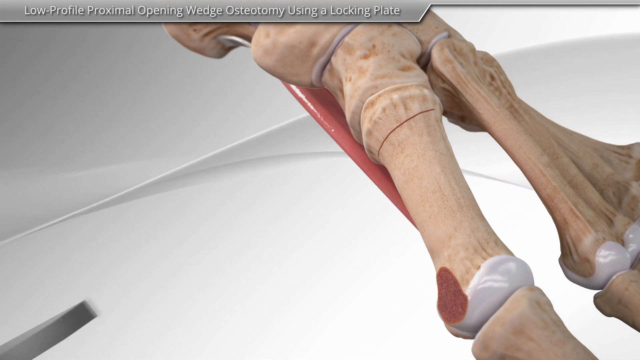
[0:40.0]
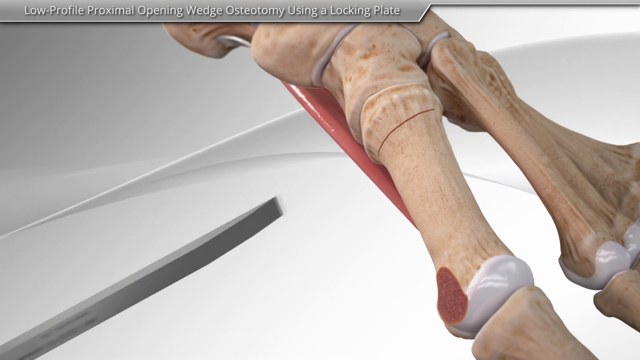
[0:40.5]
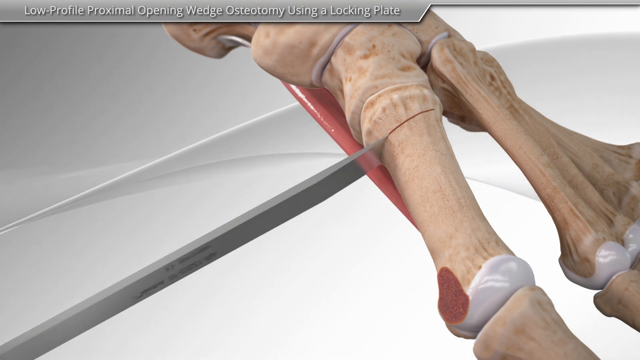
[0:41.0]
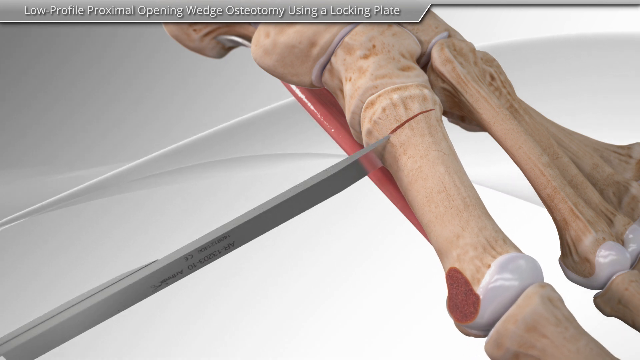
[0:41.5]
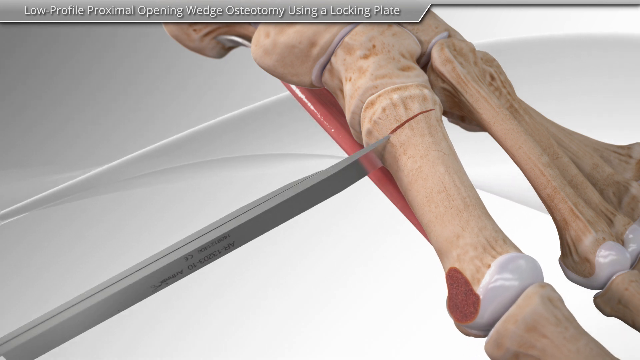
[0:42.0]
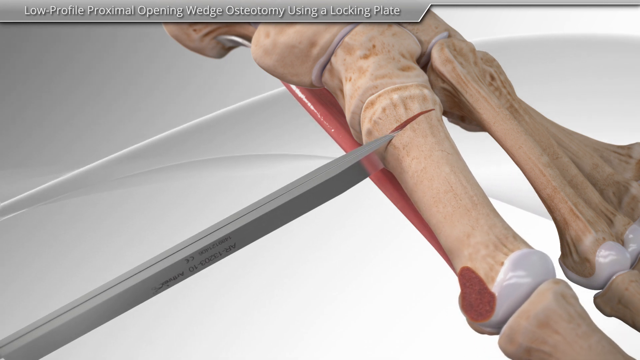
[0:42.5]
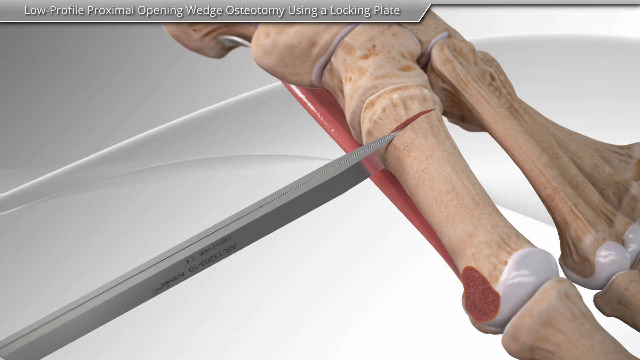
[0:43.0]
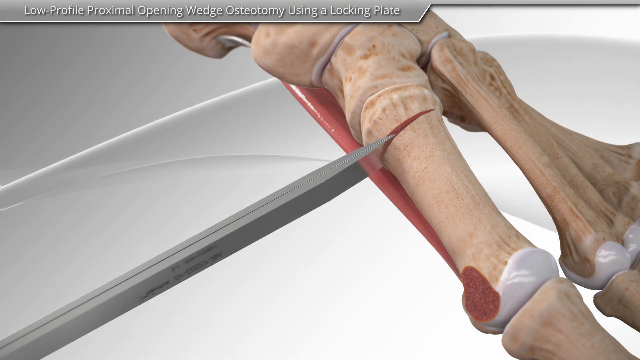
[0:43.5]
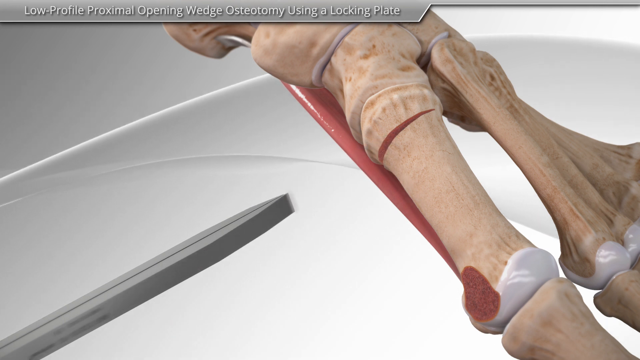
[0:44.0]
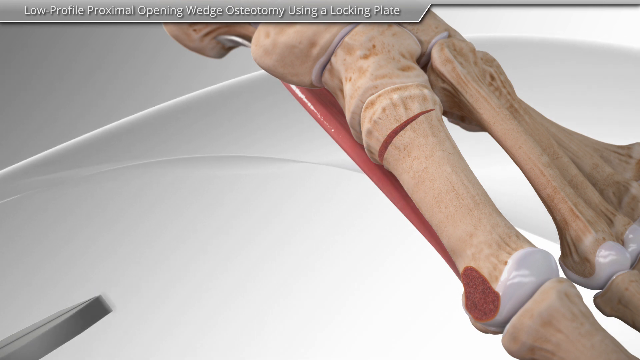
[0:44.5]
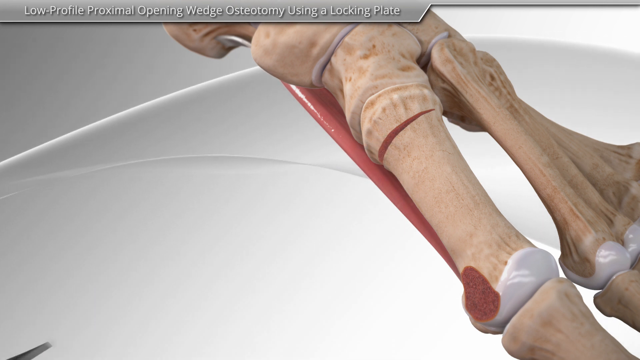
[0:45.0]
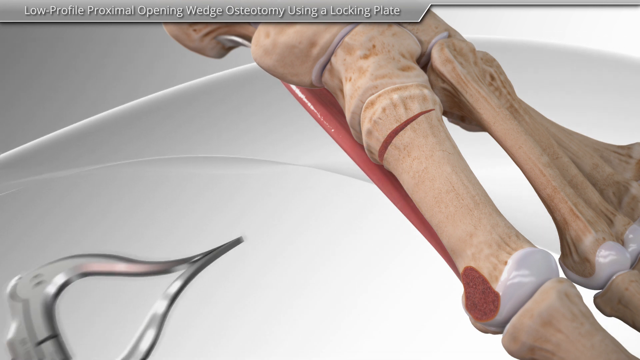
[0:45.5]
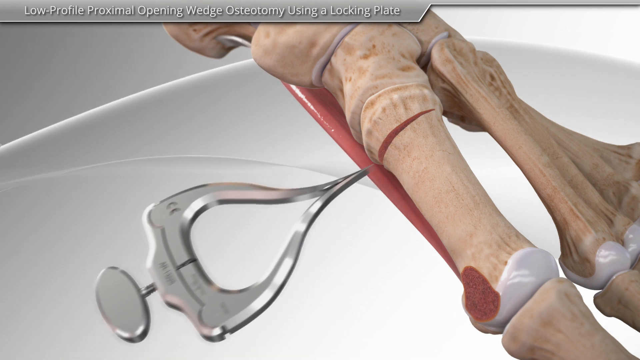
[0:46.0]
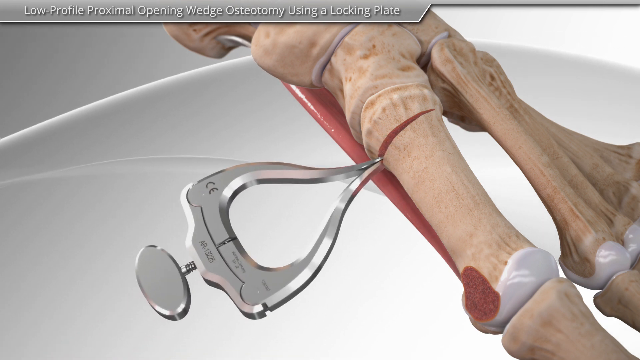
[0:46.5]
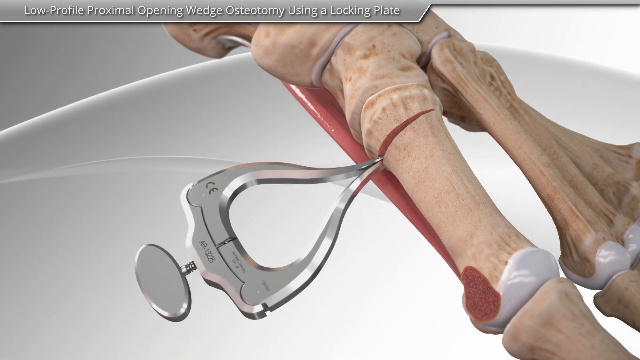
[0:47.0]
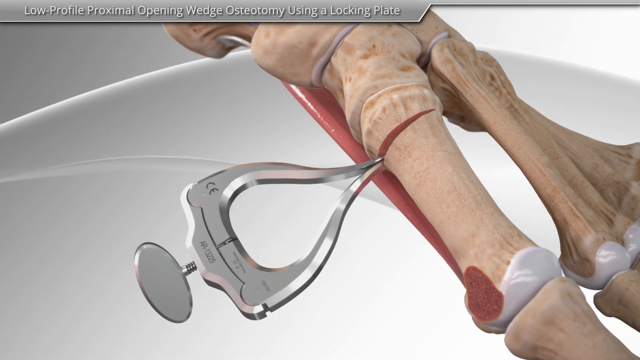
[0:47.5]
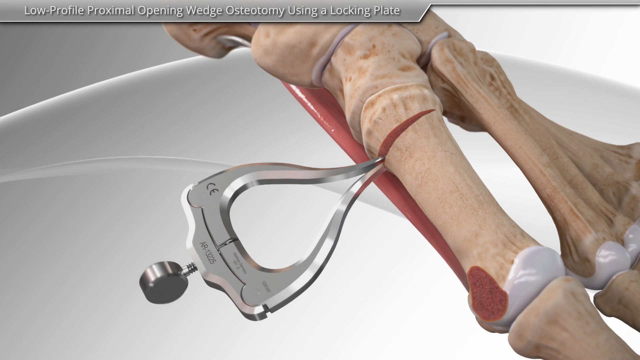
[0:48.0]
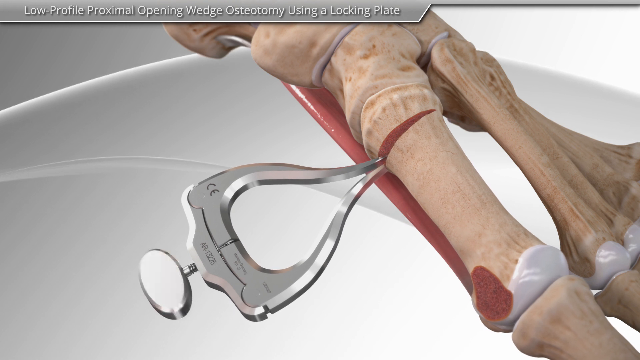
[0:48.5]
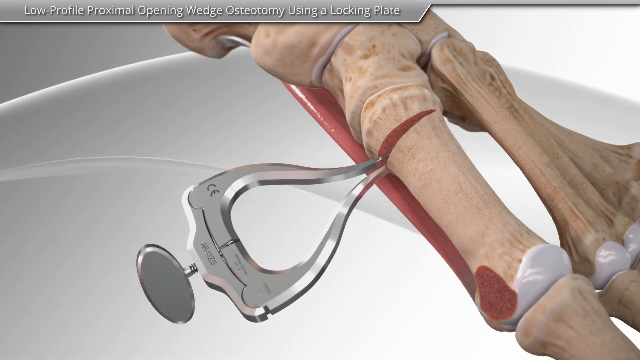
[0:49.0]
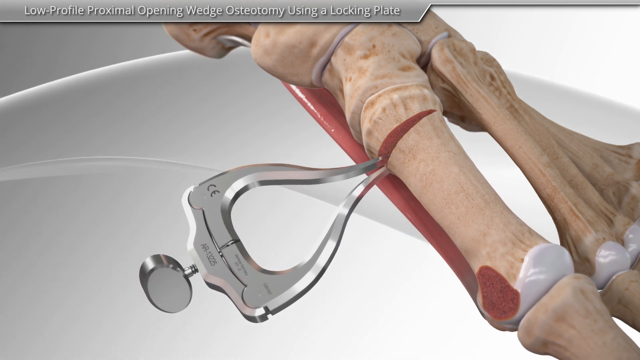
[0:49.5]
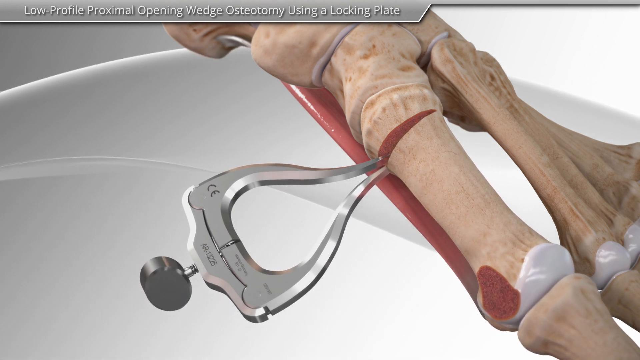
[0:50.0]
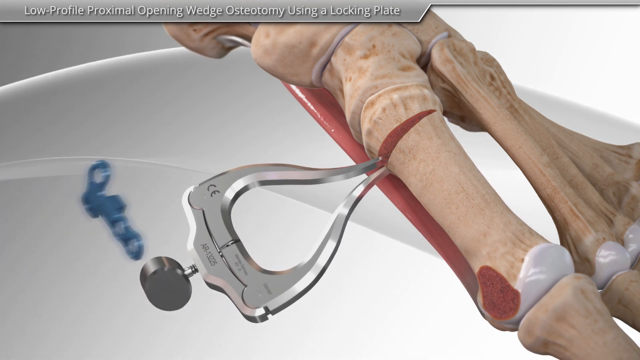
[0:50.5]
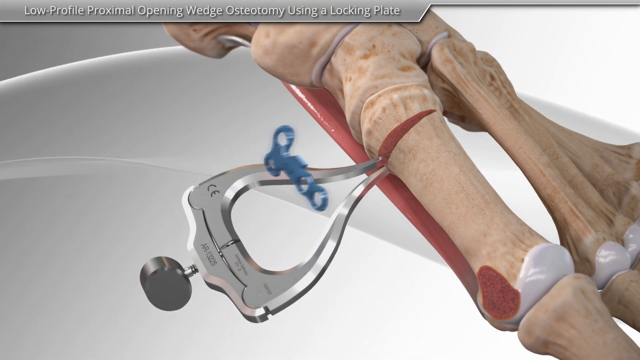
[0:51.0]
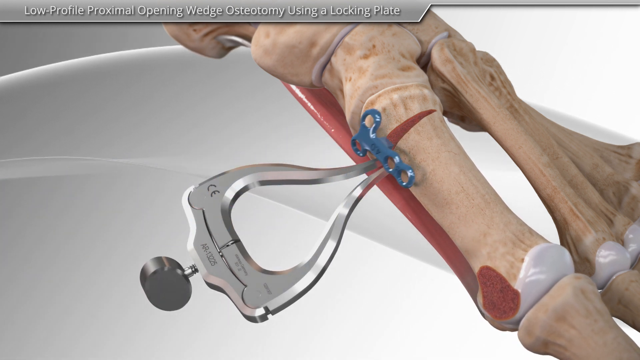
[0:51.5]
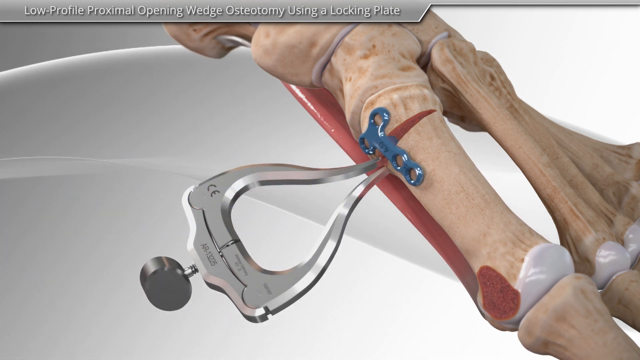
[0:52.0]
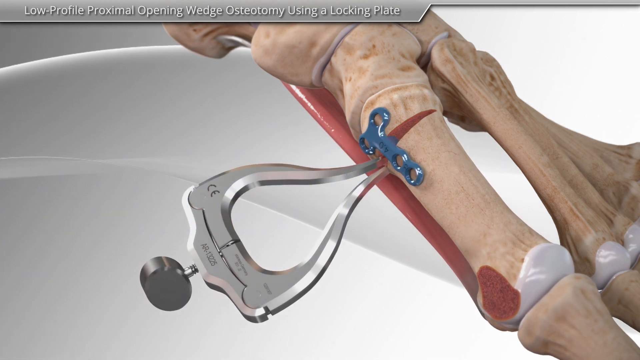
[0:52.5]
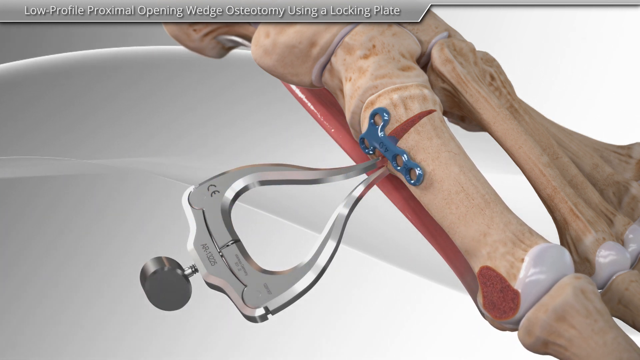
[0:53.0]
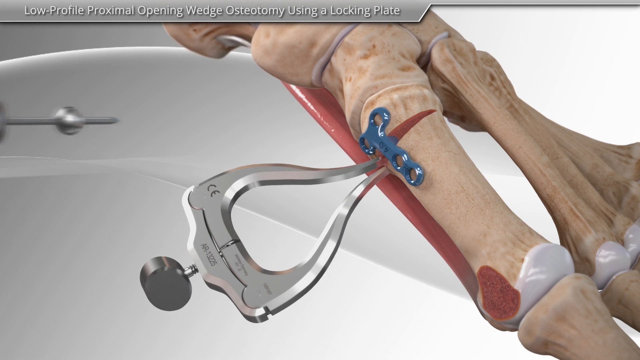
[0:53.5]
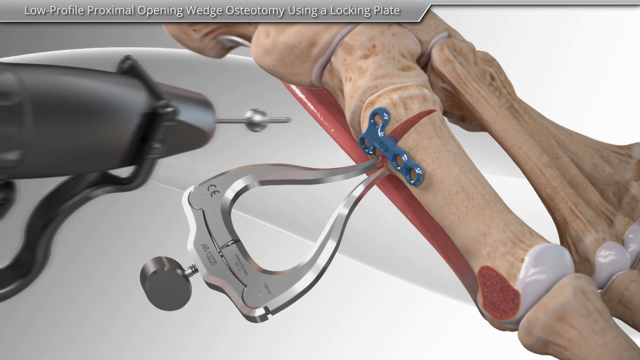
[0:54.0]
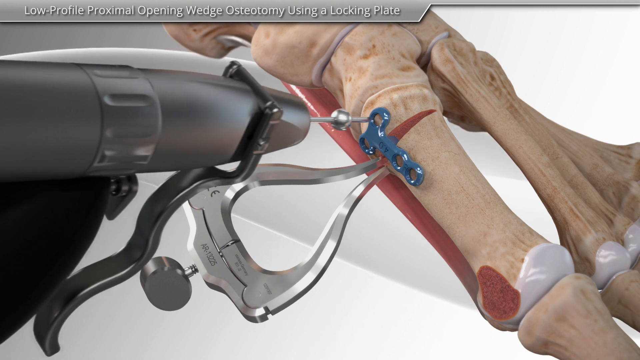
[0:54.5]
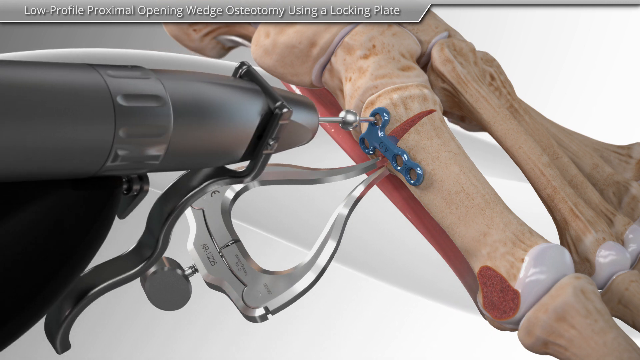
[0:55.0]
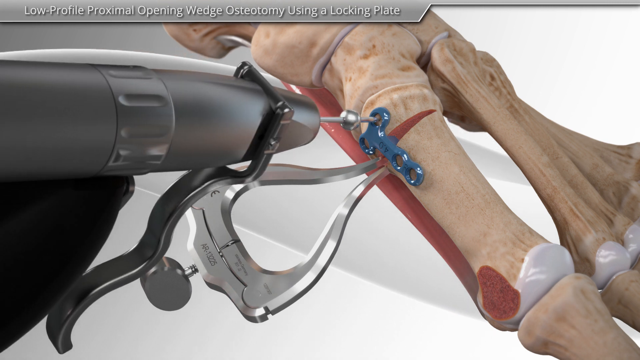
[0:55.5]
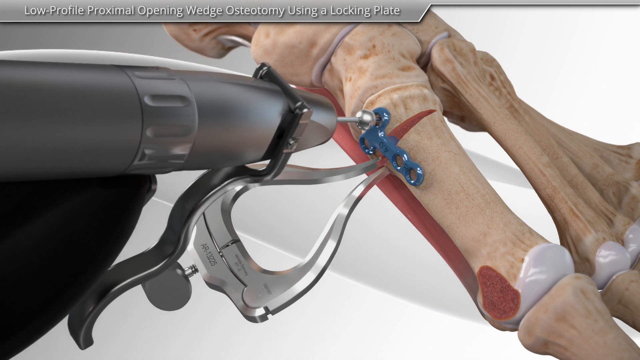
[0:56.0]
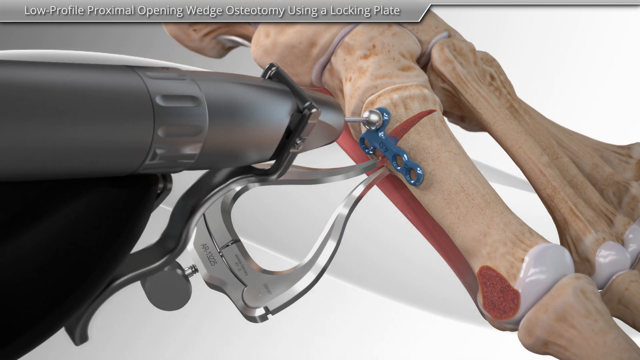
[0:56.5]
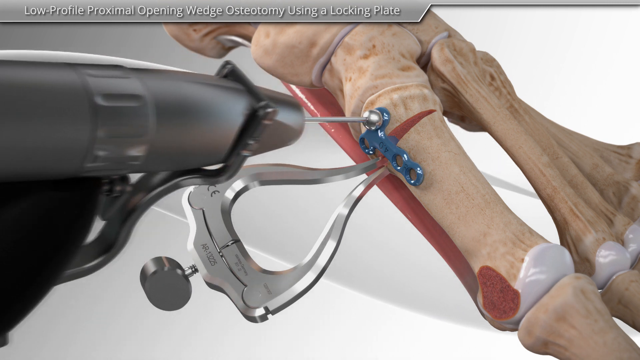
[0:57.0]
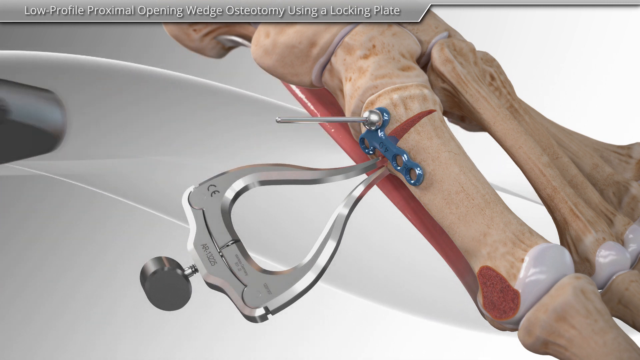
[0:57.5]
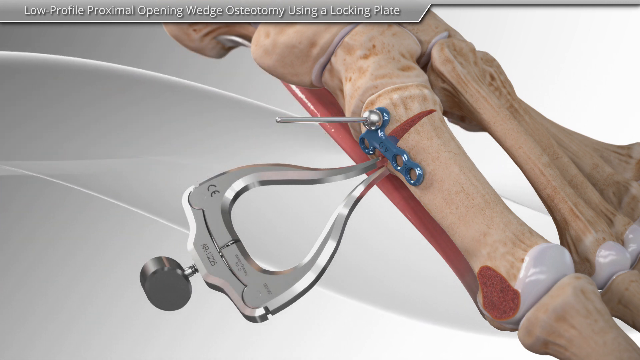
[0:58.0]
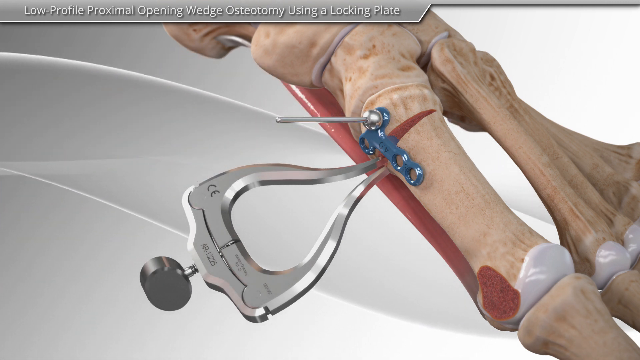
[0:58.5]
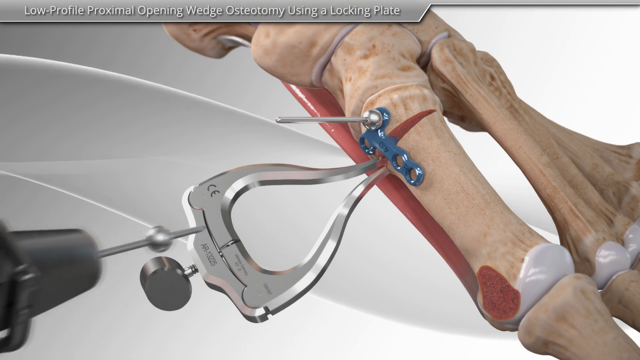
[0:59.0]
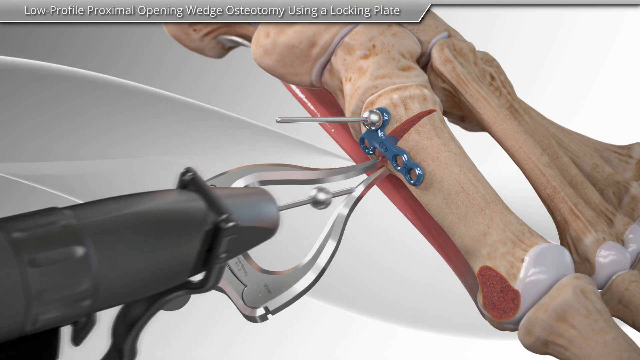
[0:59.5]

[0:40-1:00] A very close-up view of a replica of the human bones of the foot is zoomed in on one of the joints of the toe. The background is white, with several wavy lines across the screen that appear to move toward the left, making it appear as if the background is moving behind the foot. The middle of the foot is across the top center of the screen, and the toes go off the screen on the lower right-hand side. A sharp metal object comes up from the left-hand corner and inserts a flat blade into the toe joint, prying it slightly open. A silver clamp with a triangular clamp and a screw top comes in from the same place and is placed inside the joint, holding it open. The oval screw top rotates clockwise several turns, causing the clamp to open inside the toe joint and moving the joint further apart. A blue screw plate moves in from the left until it is sitting against the joint. A drill then moves in and places a screw into two of the holes in the screw plate.